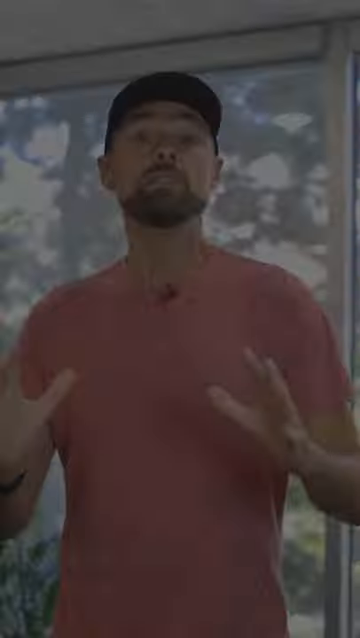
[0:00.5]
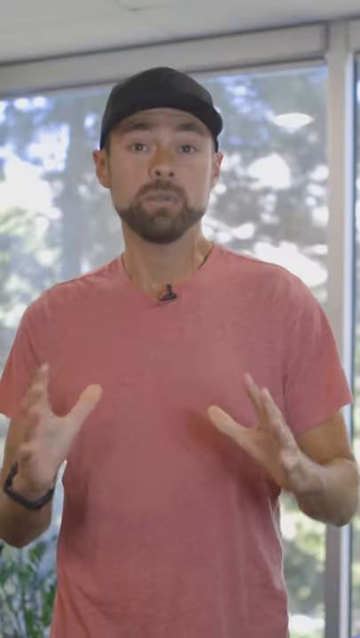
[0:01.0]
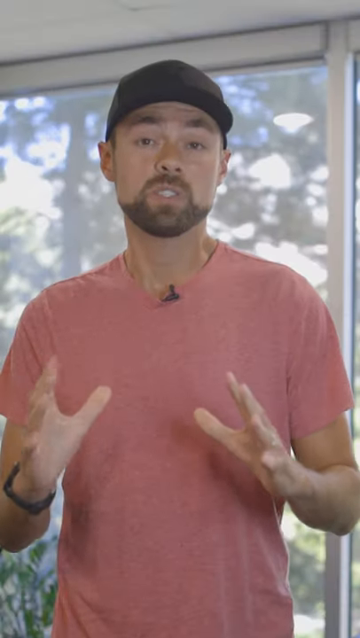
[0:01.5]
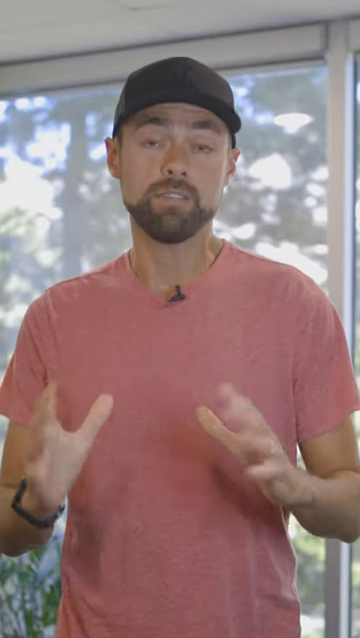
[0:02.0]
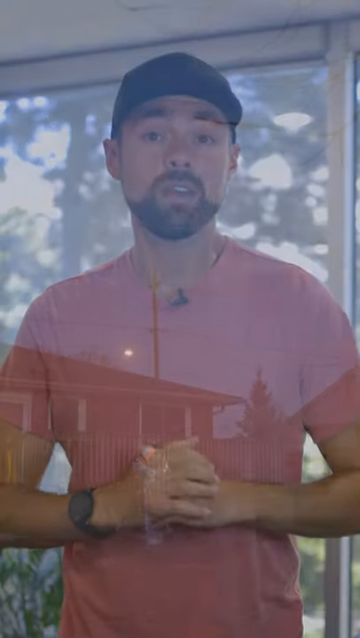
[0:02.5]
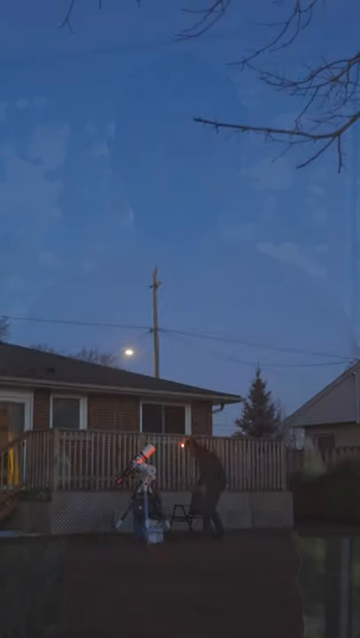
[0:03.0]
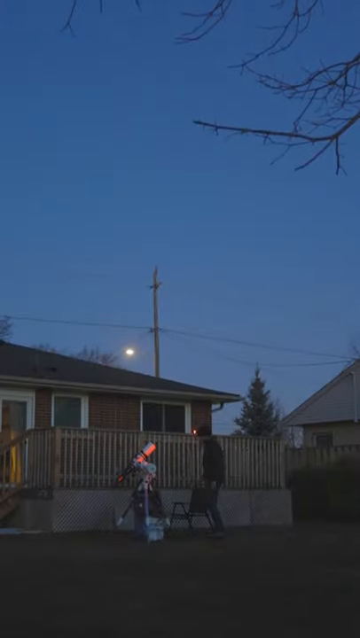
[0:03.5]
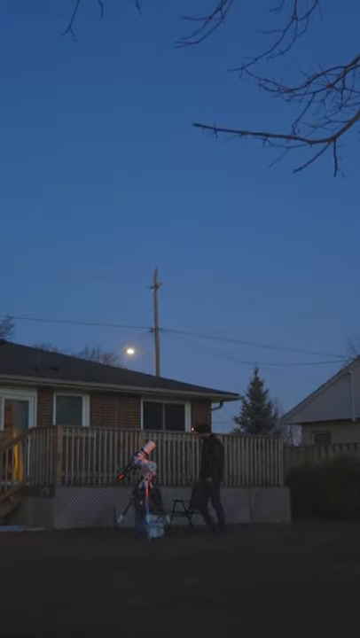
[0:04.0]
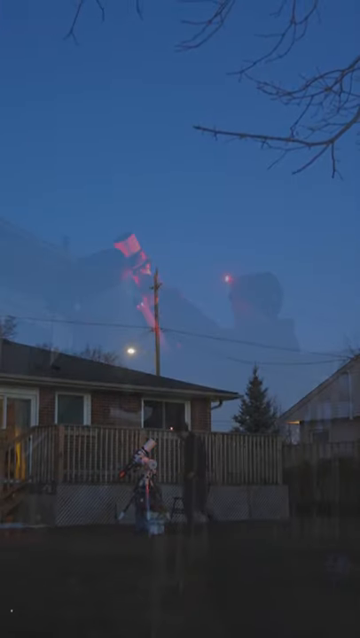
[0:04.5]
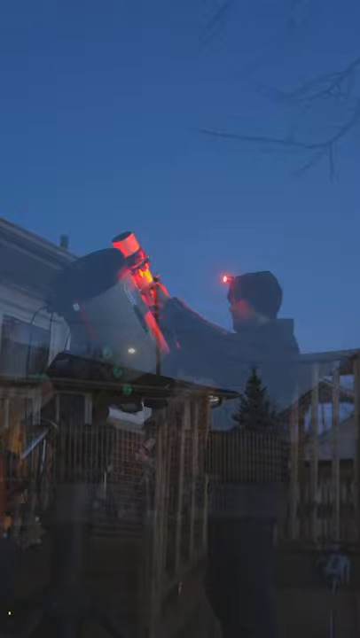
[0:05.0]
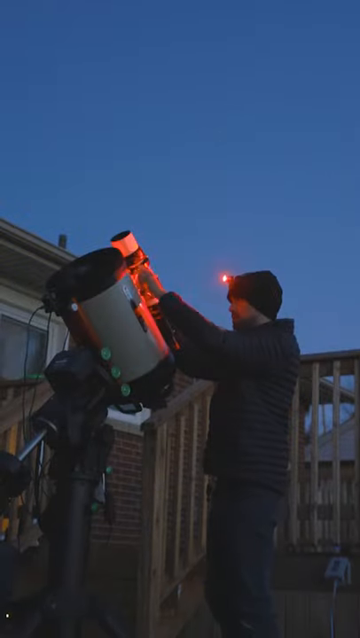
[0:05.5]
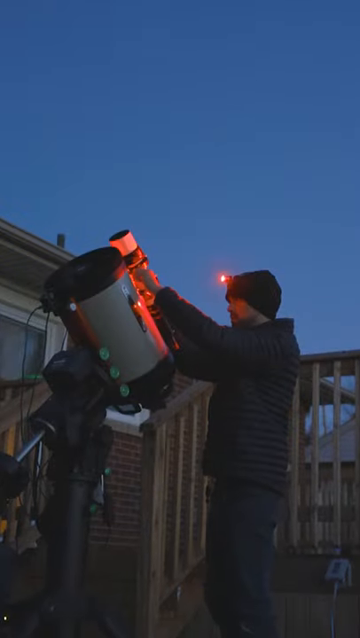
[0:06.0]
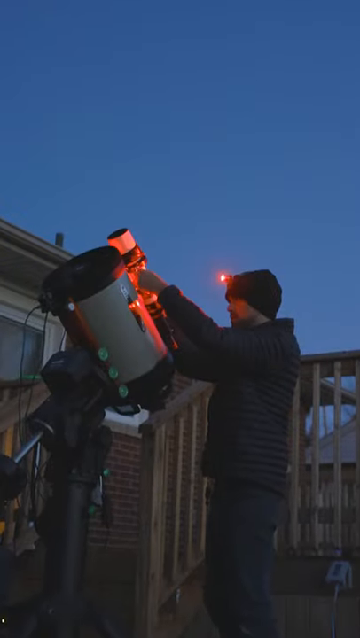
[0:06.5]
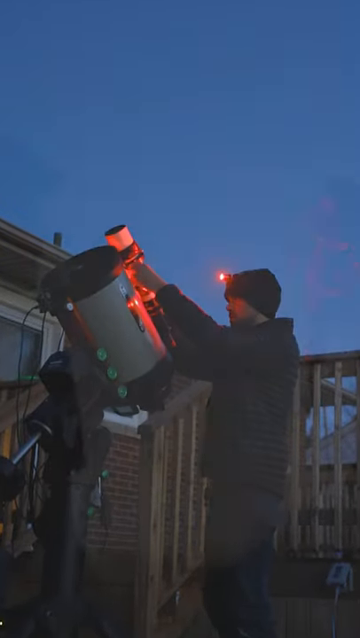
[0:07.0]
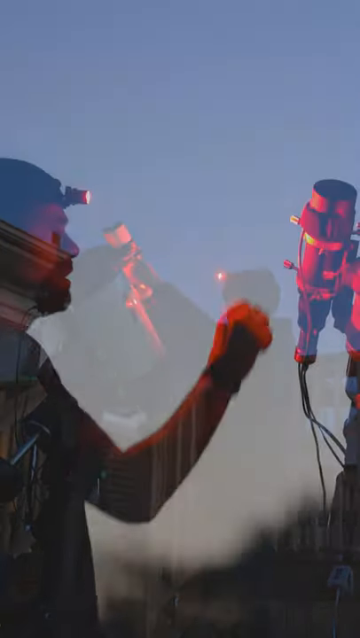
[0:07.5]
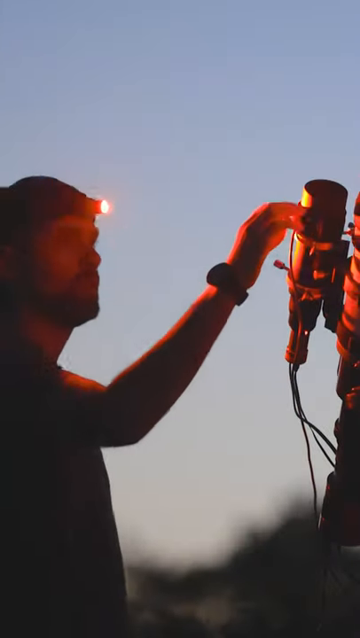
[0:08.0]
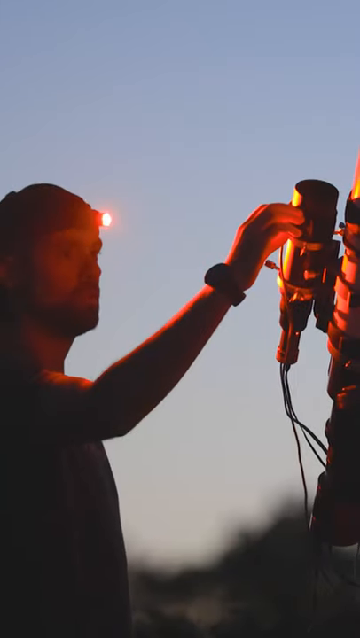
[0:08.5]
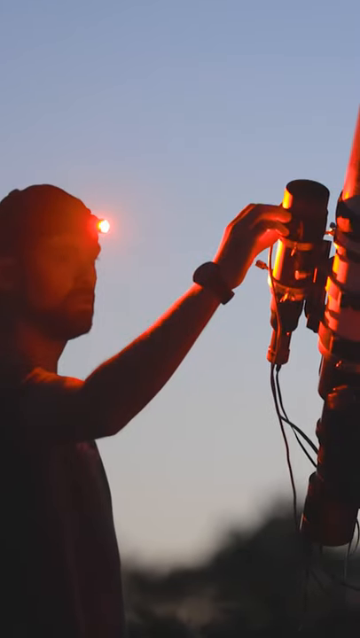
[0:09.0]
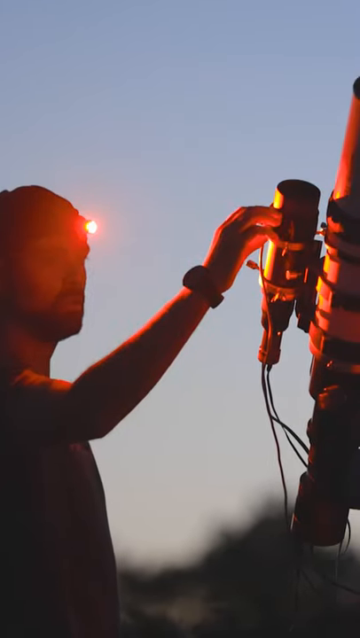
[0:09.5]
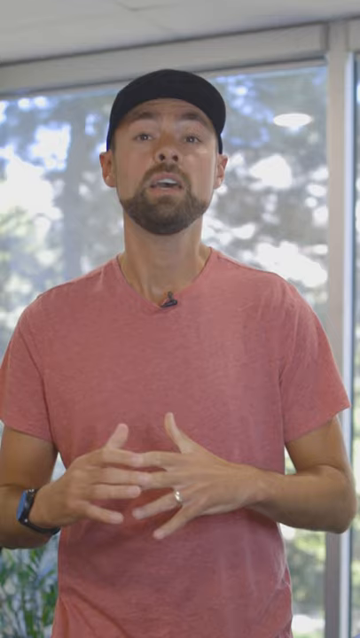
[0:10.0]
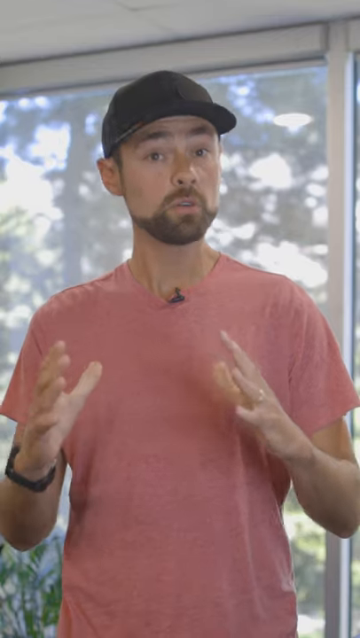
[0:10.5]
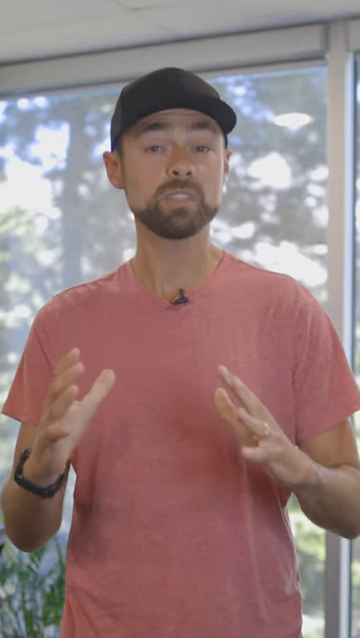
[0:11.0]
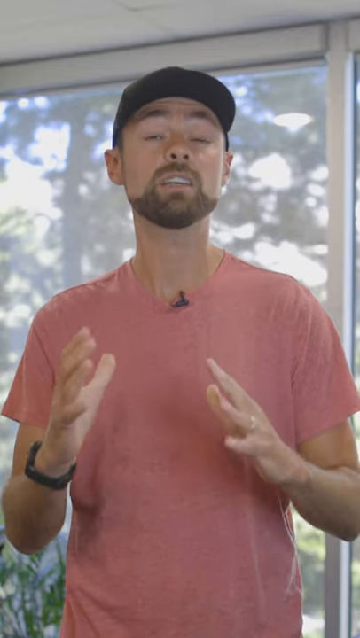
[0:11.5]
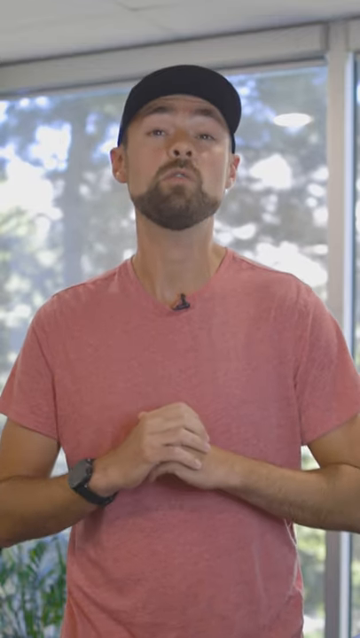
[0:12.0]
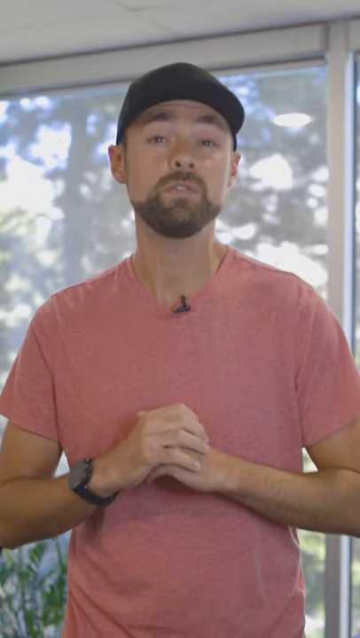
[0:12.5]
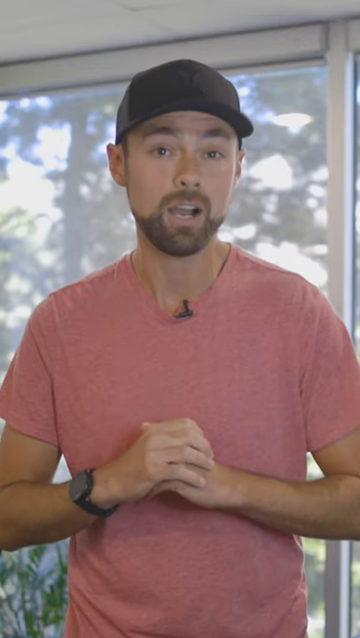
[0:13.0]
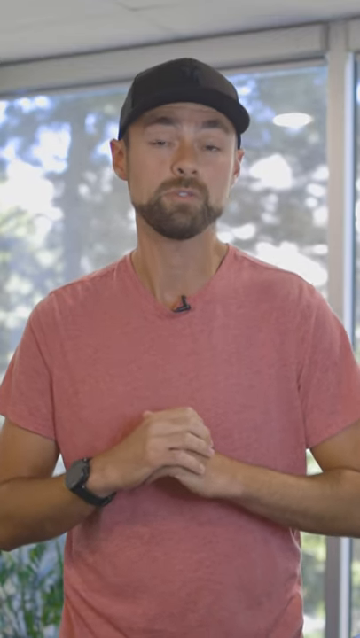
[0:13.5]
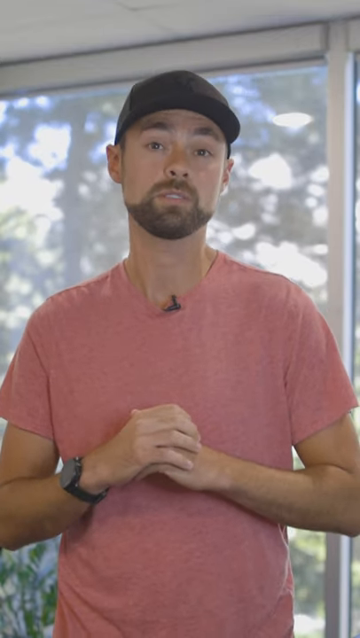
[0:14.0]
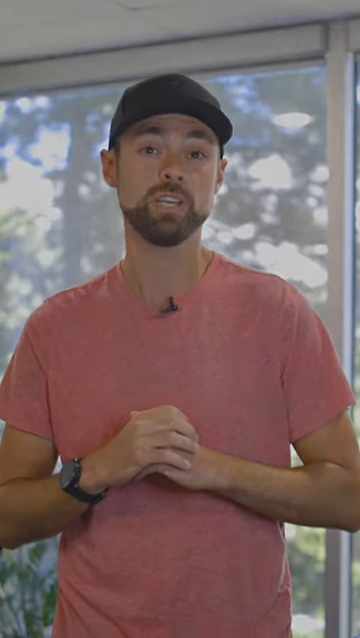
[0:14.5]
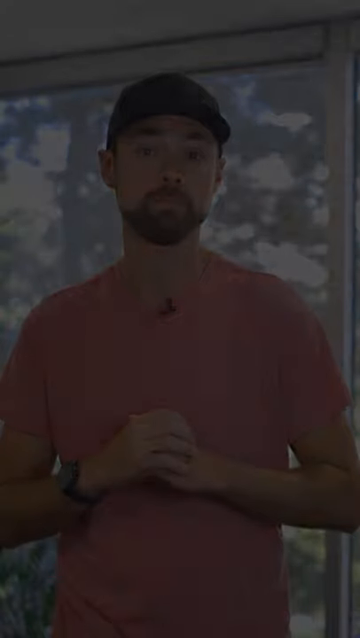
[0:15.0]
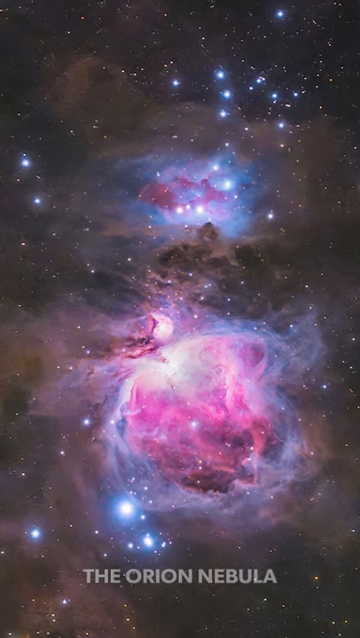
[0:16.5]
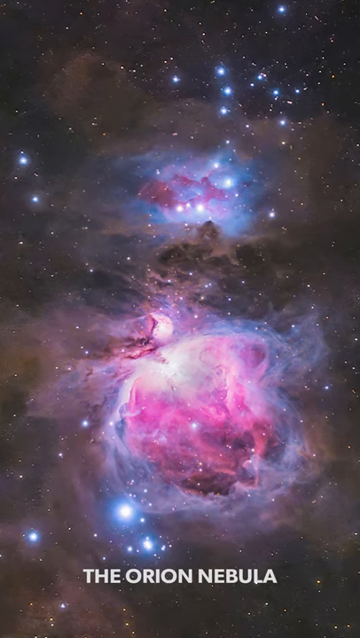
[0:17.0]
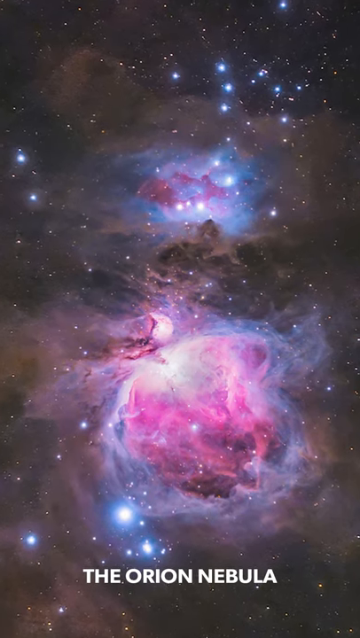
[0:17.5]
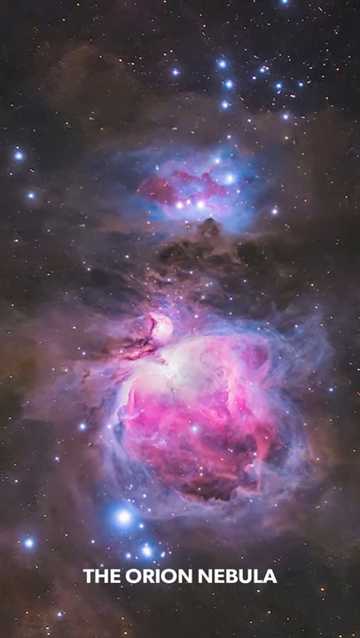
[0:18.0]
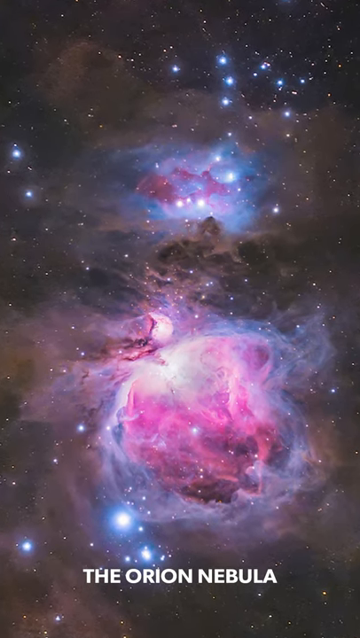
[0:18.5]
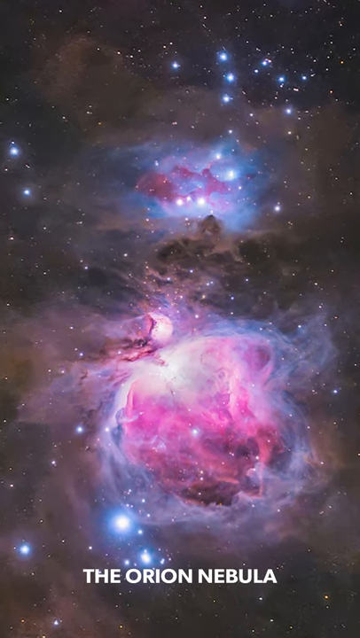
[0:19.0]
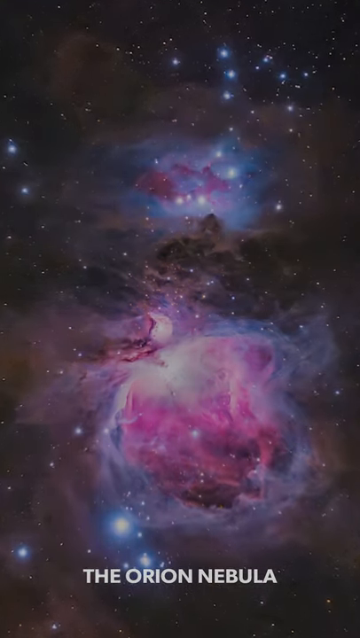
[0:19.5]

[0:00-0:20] A single man in a red shirt and a baseball cap is centered in the frame, talking. The video cuts to his backyard at dusk, where he seems to be setting up a very high-powered telescope while wearing a headlamp. The telescope seems to be very large and expensive. It then cuts back to the man talking, and then to images his telescope has captured, one of which is the Orion Nebula, shown in purple, blue and pink and full of stars. The video then cuts back to the man talking.